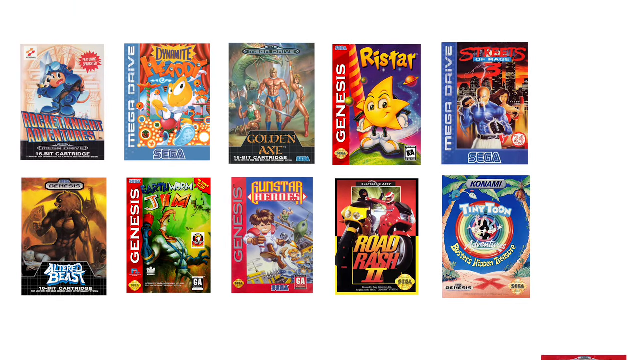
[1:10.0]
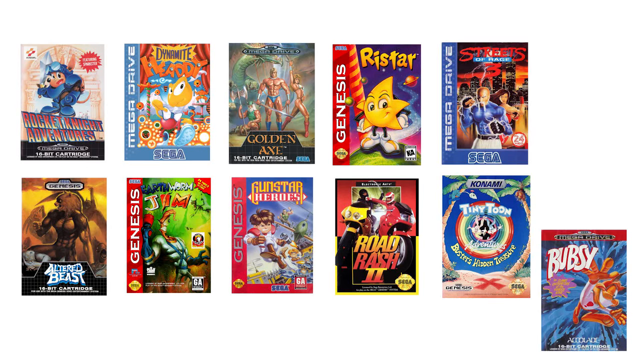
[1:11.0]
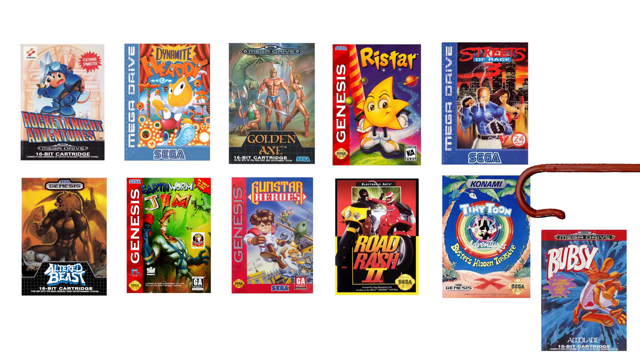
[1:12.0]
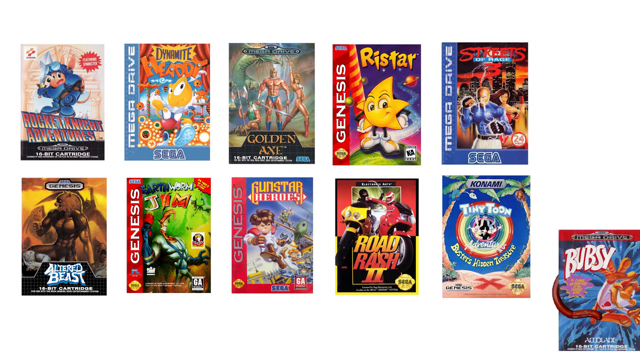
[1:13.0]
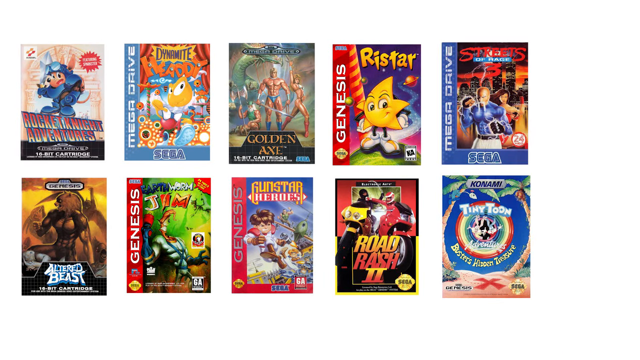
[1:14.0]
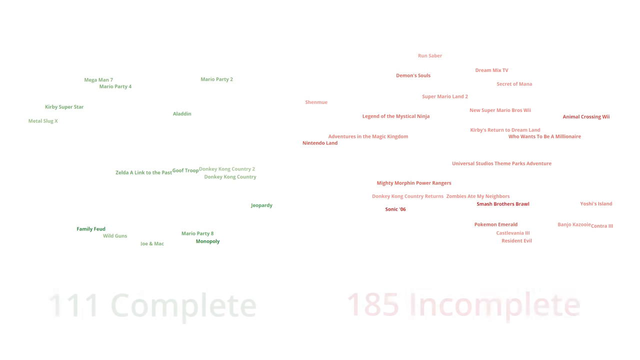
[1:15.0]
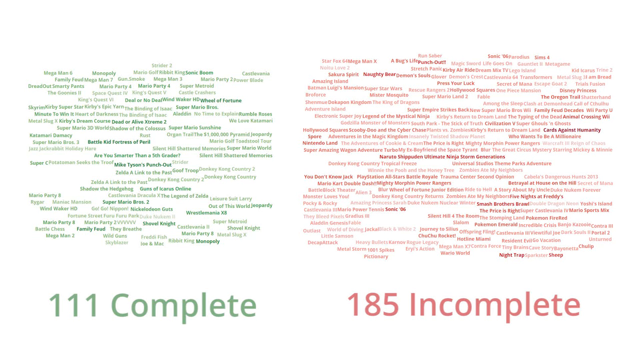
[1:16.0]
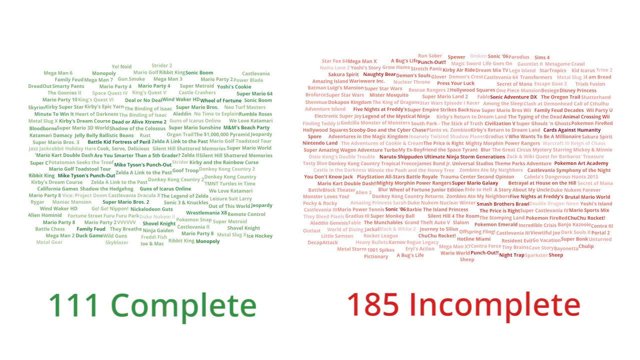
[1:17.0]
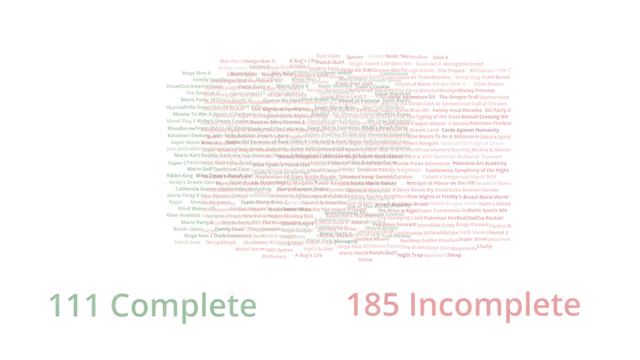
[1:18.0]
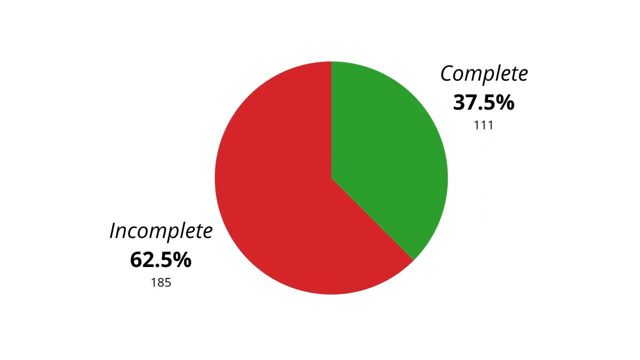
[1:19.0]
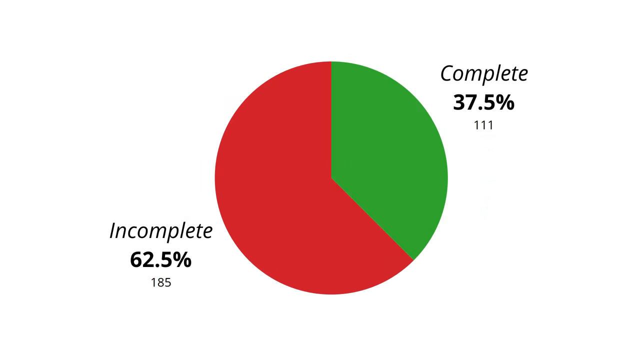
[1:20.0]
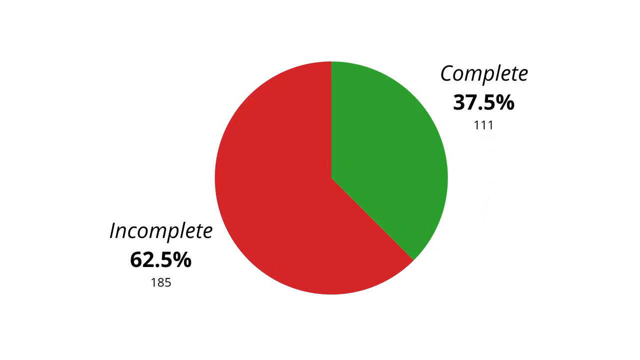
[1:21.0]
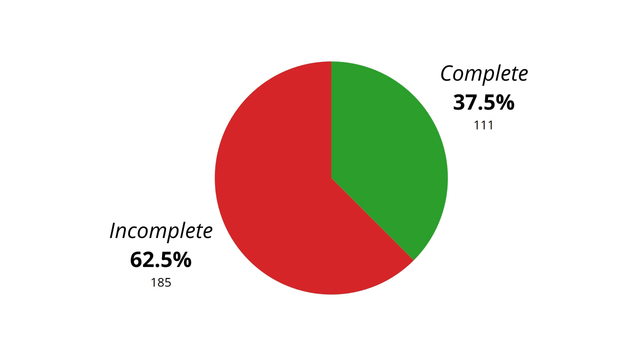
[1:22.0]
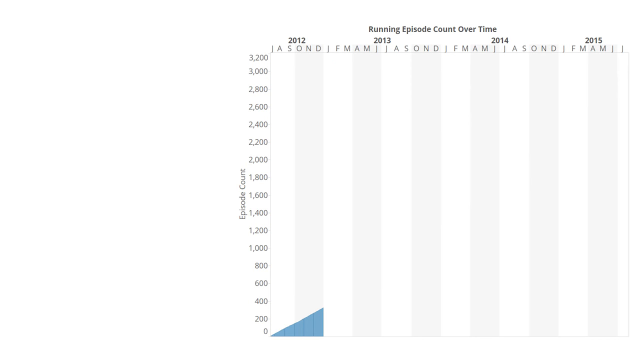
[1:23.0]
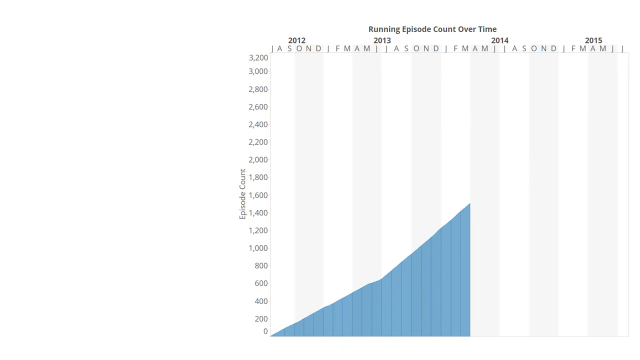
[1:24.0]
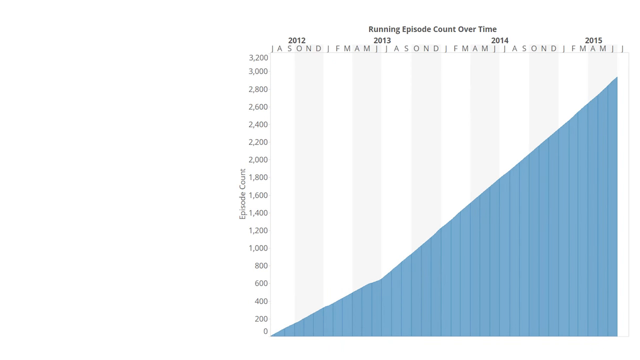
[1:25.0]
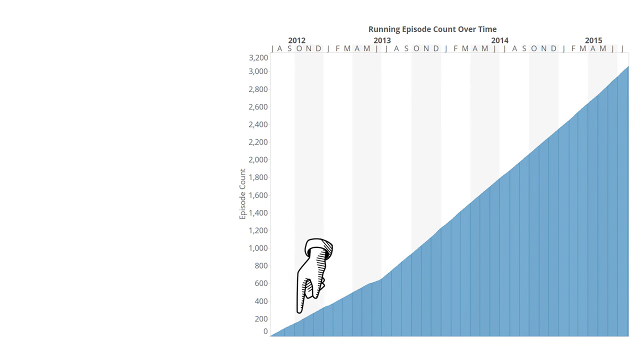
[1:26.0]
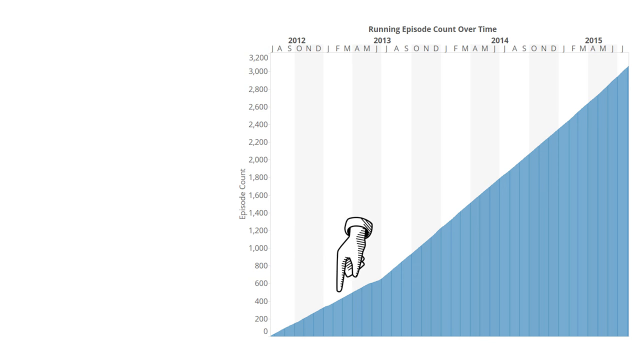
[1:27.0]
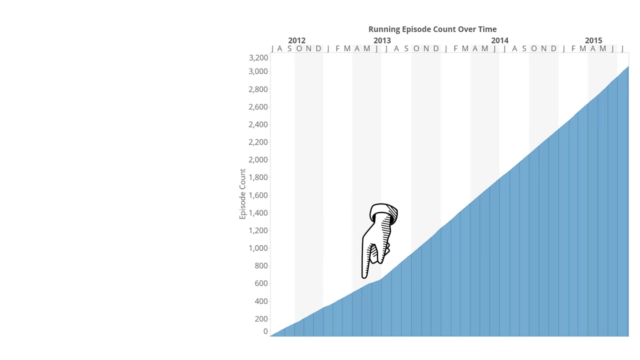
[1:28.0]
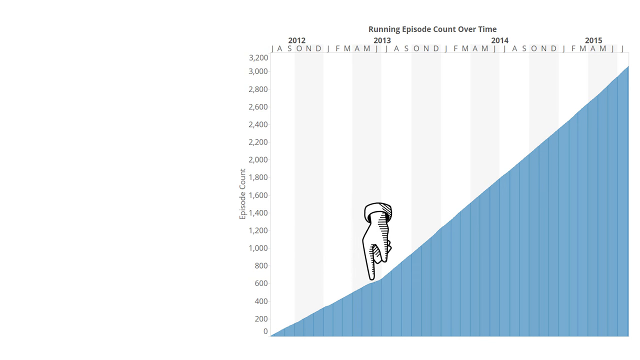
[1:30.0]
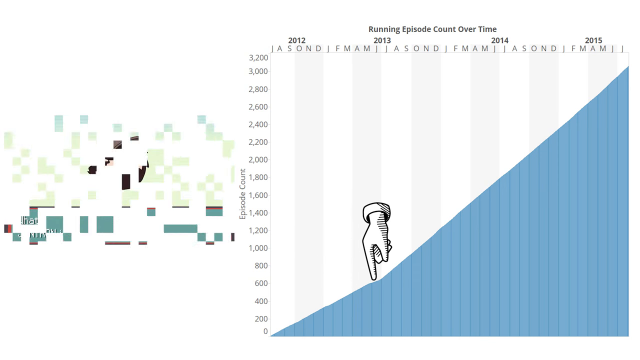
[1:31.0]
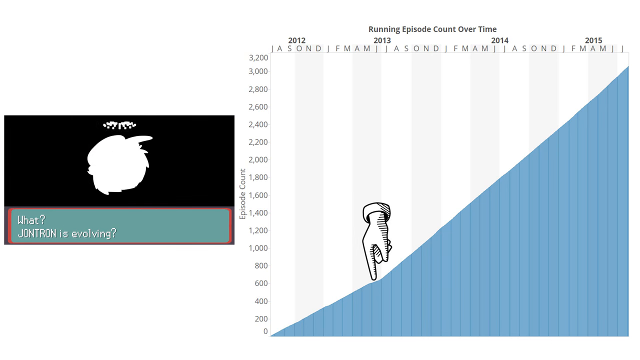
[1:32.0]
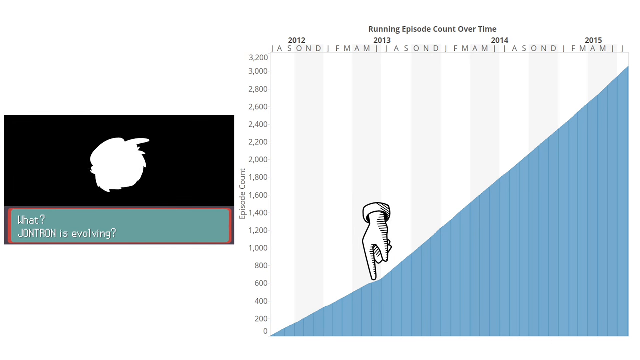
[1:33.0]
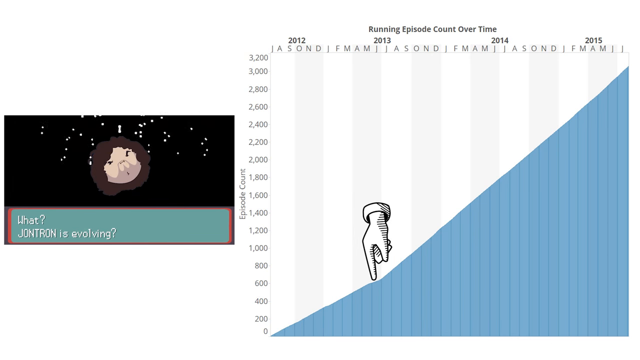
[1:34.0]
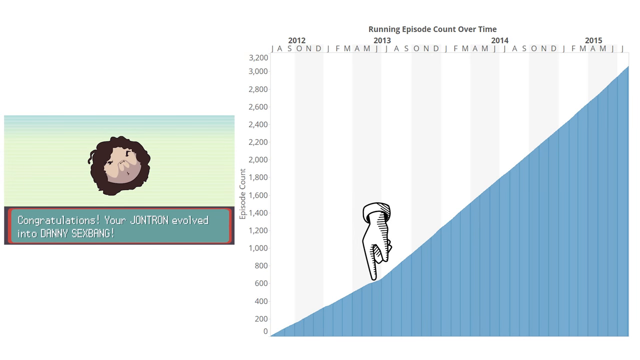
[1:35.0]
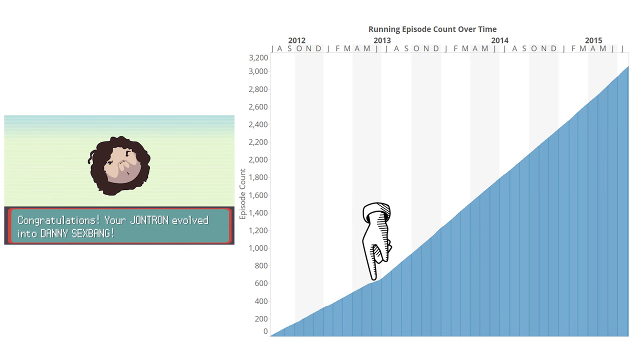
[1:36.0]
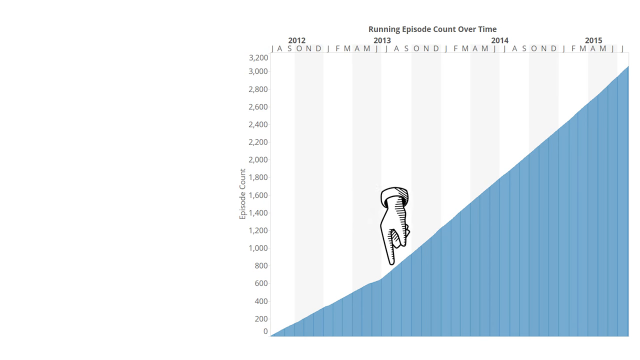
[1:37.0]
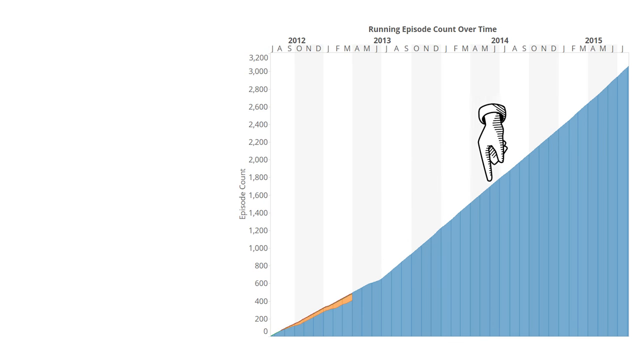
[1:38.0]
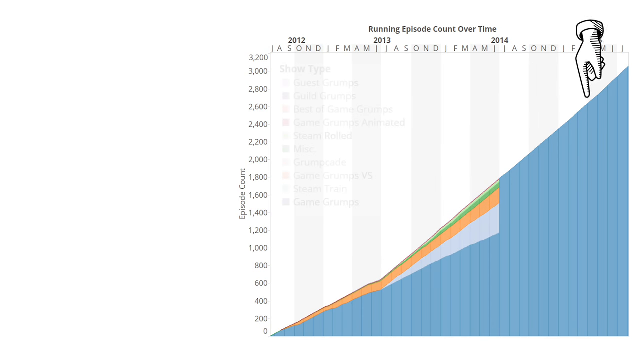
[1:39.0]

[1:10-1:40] A catalog of several games appears. On the far left appears to be Rocket Knight Adventures, showing almost a small dog that looks like Mega Man. A Sega game says "Dynamite," with what appears to be a yellow figure head. In the middle is Golden Axe, showing what appears to be a very muscular man wearing a bikini standing next to what appears to be a dwarf with a battle axe, and to the far right of them appears to be a woman in a bikini. A fourth game on the right is Genesis System Ristar, and Streets of Rage 3, a Sega game, is on the far right. On the bottom side of the catalog are Altered Beast, Earthworm Jim on the Genesis, Gunstar Heroes in the center, Road Rash 2, and on the far right Konami Tiny Toon. Bubsy is then shown, and what appears to be a hook pulls them out of the screen.